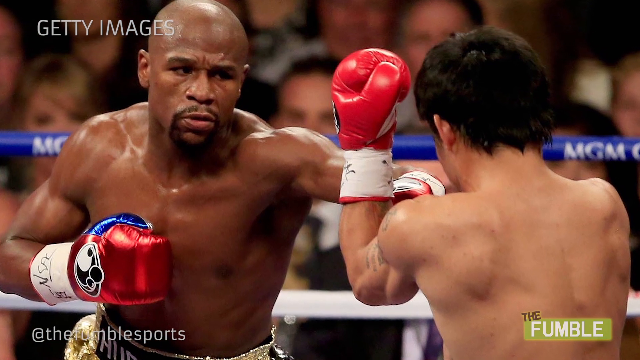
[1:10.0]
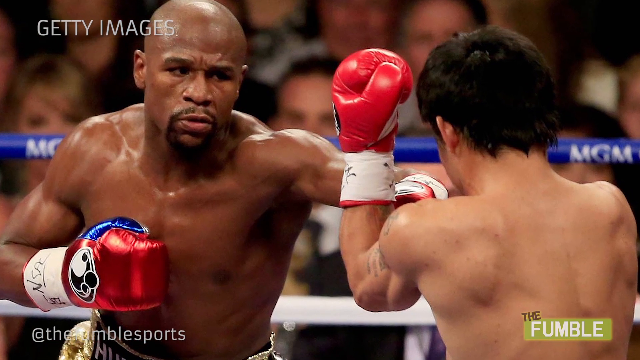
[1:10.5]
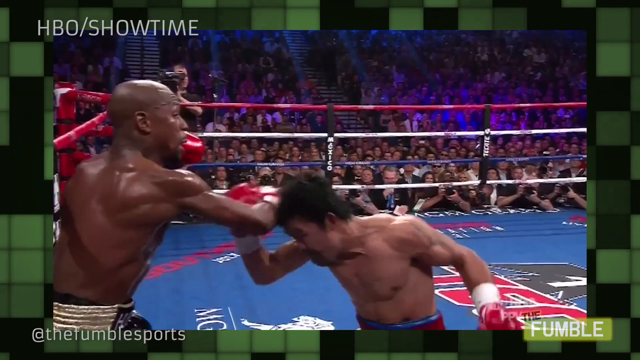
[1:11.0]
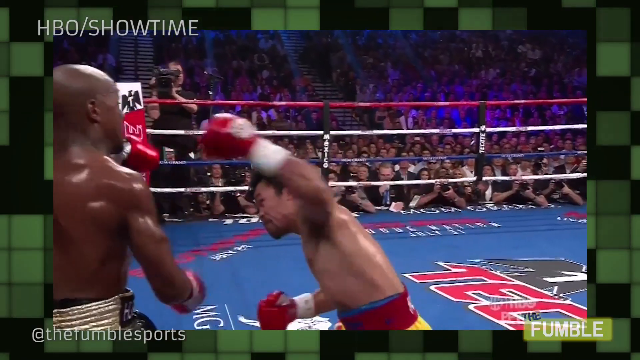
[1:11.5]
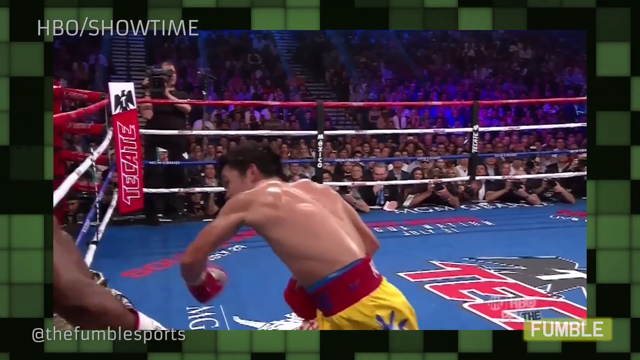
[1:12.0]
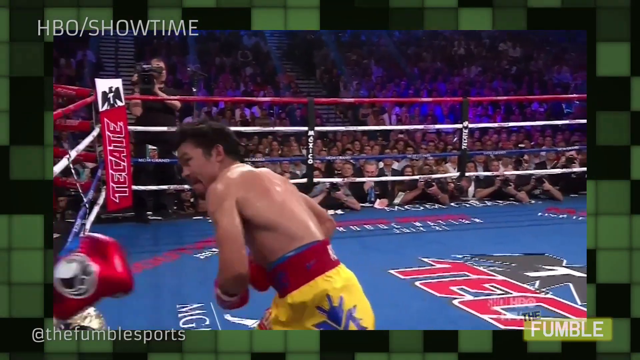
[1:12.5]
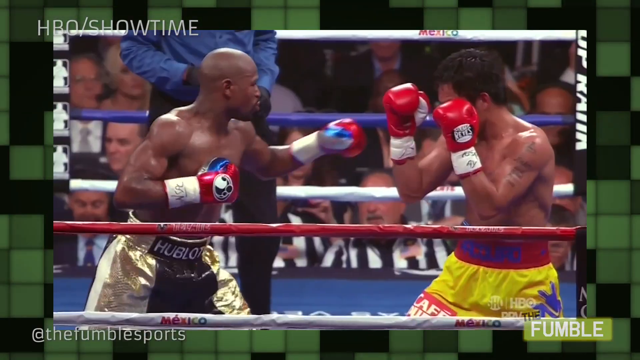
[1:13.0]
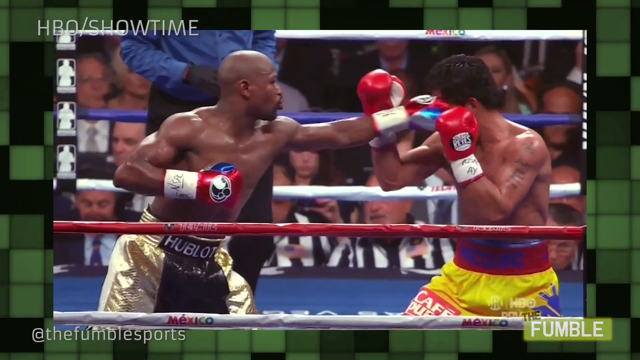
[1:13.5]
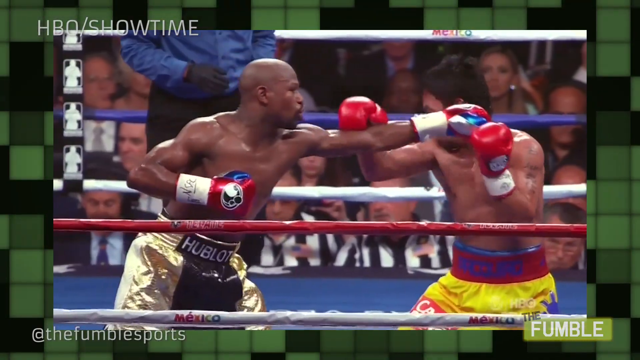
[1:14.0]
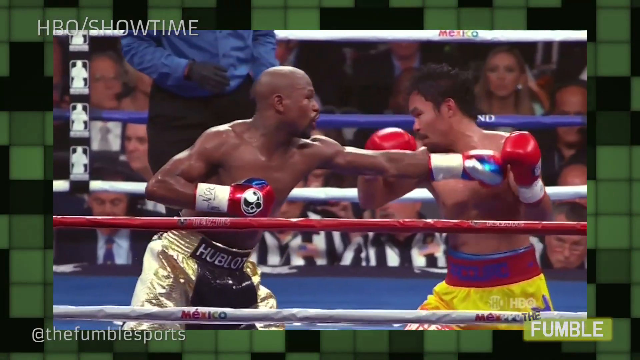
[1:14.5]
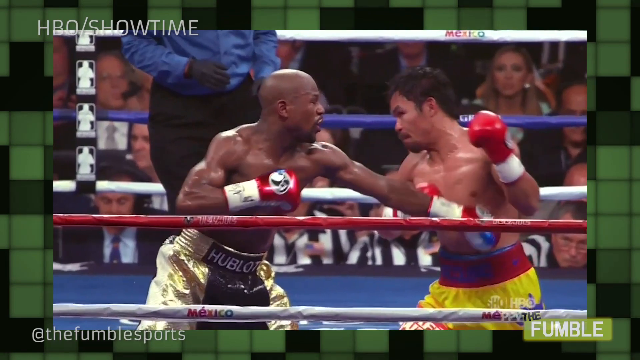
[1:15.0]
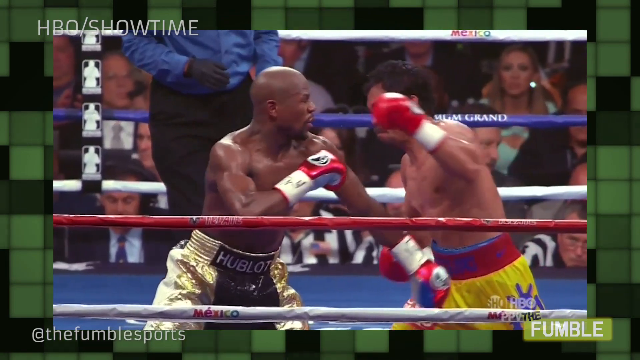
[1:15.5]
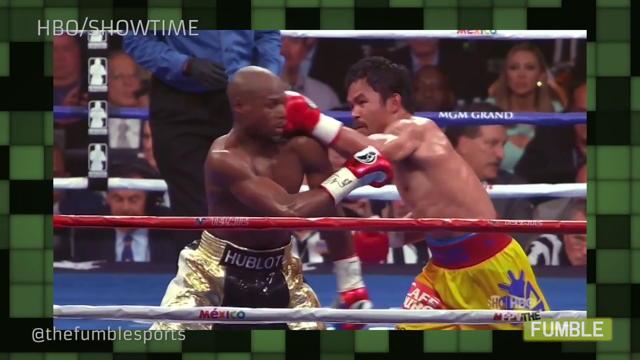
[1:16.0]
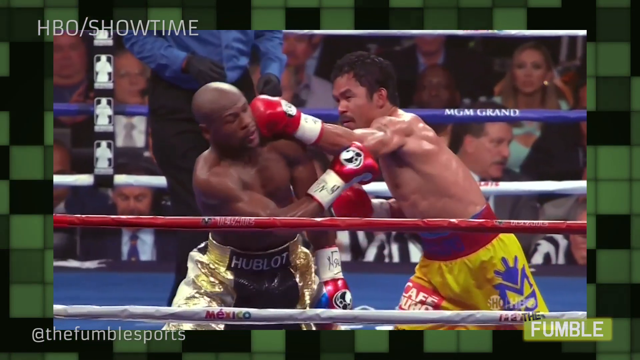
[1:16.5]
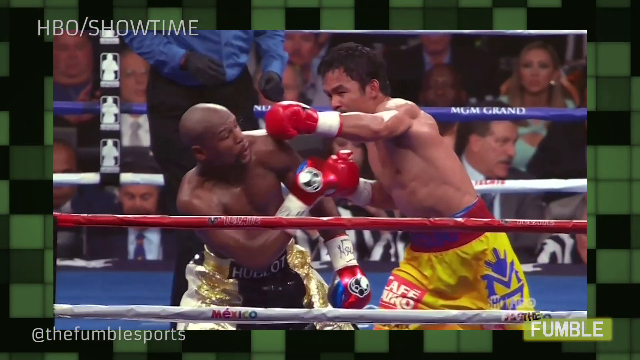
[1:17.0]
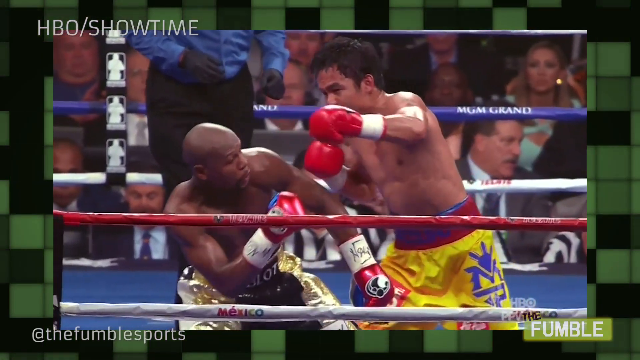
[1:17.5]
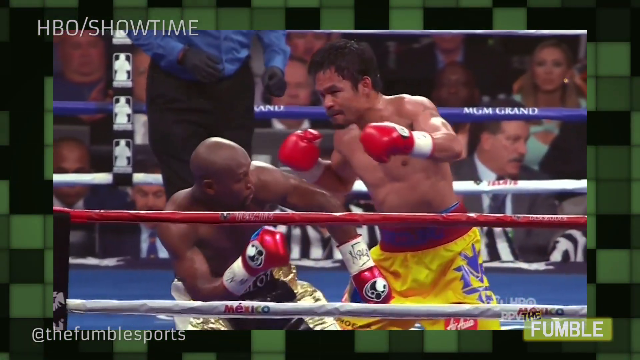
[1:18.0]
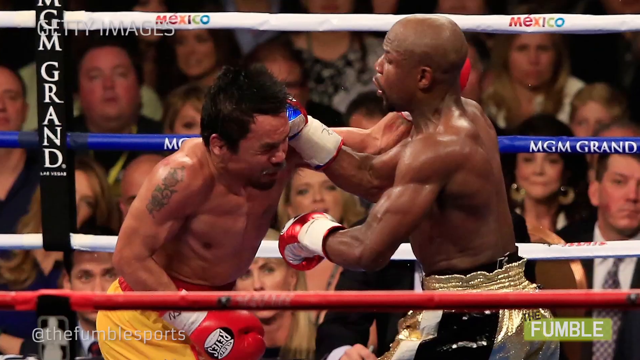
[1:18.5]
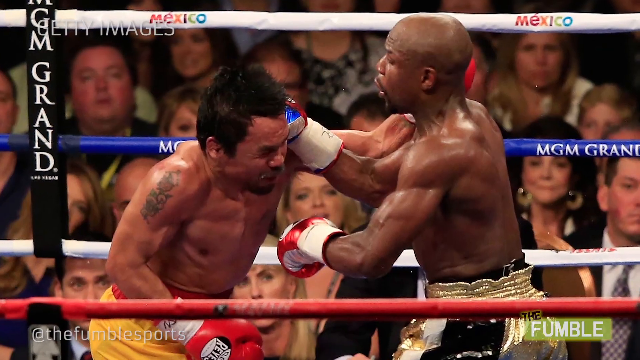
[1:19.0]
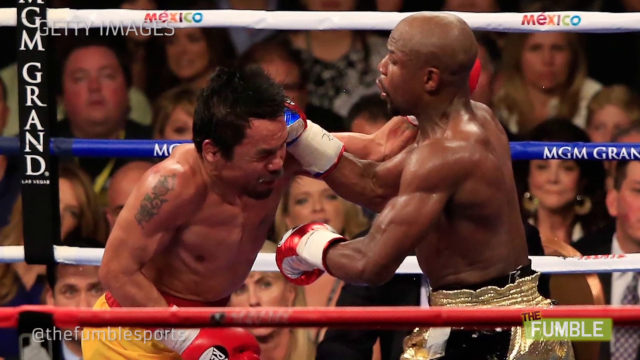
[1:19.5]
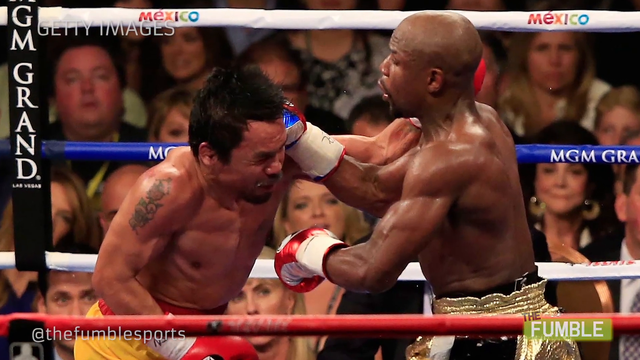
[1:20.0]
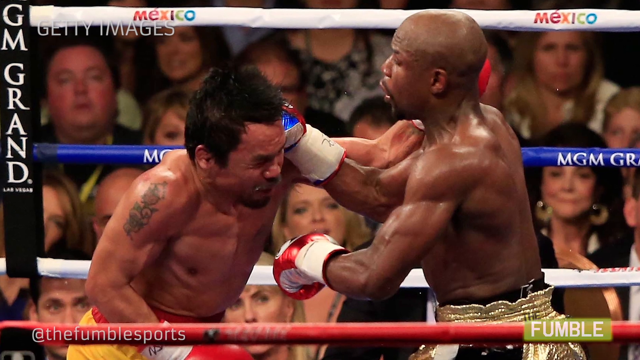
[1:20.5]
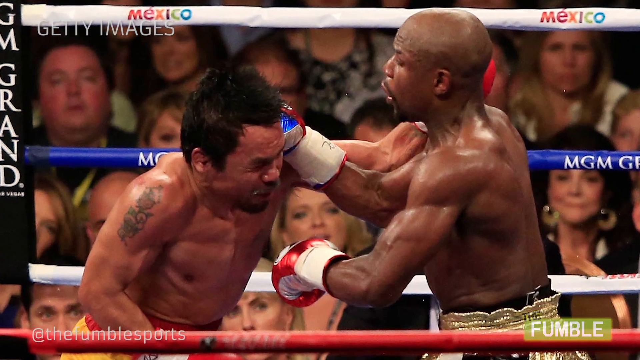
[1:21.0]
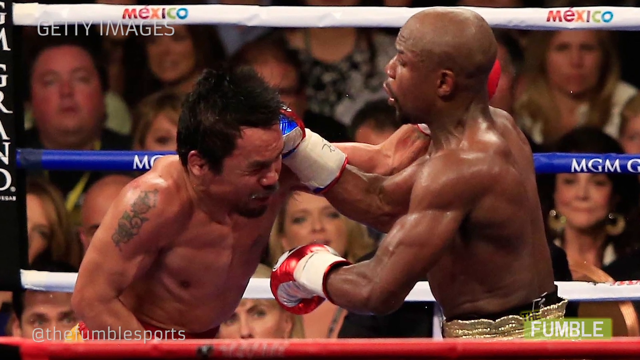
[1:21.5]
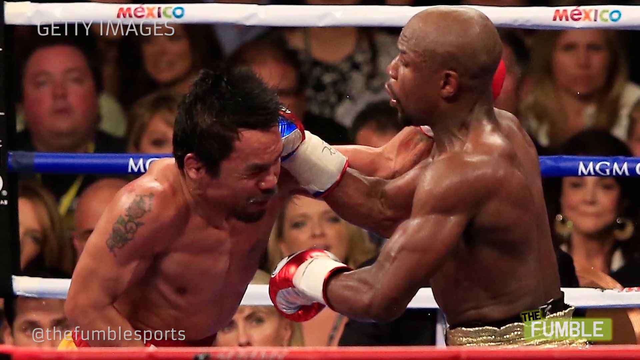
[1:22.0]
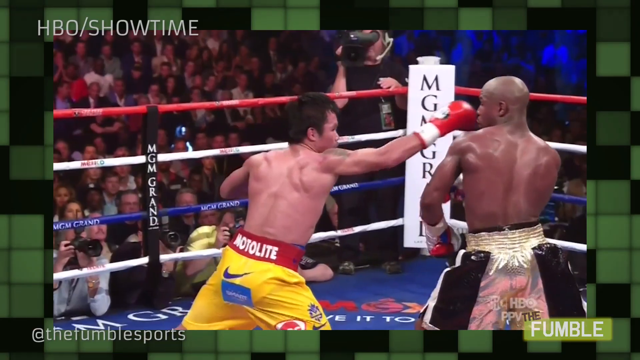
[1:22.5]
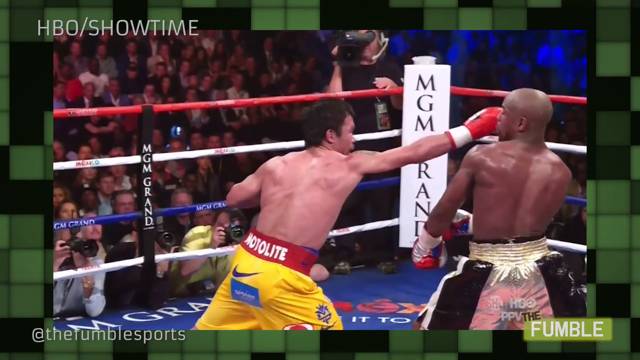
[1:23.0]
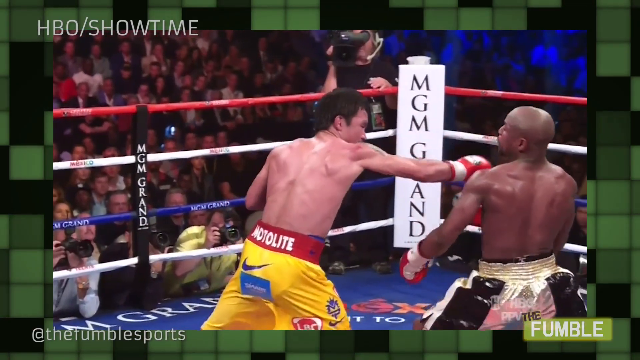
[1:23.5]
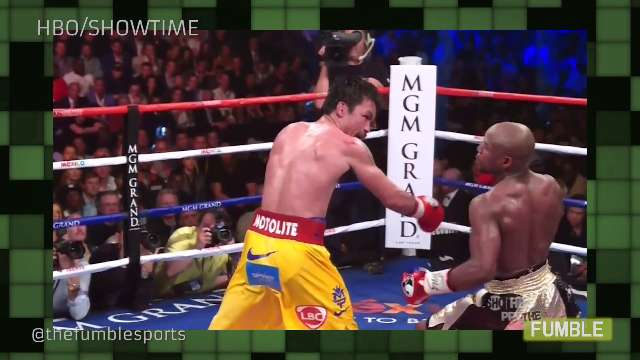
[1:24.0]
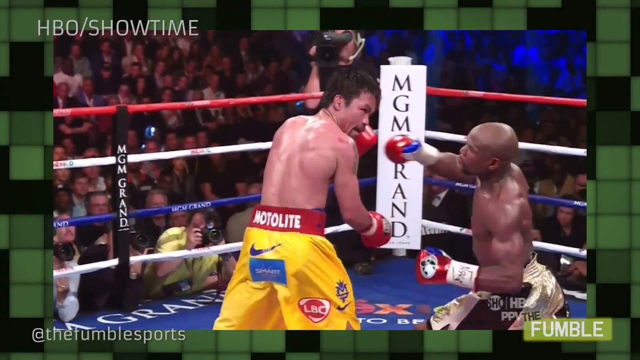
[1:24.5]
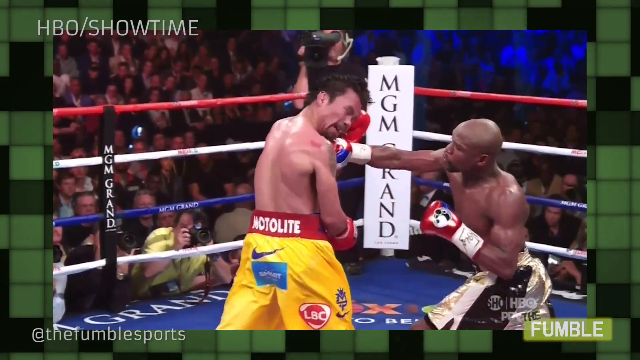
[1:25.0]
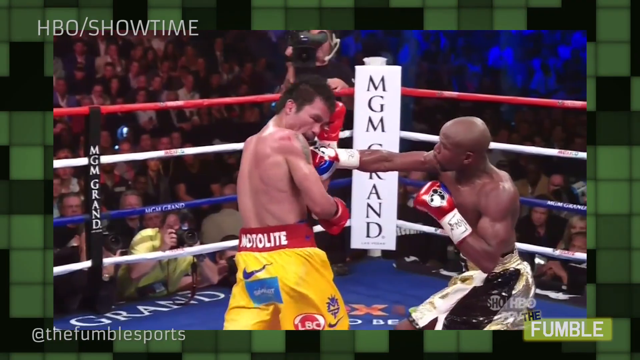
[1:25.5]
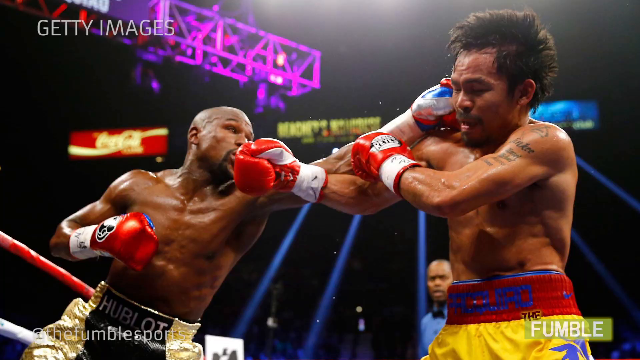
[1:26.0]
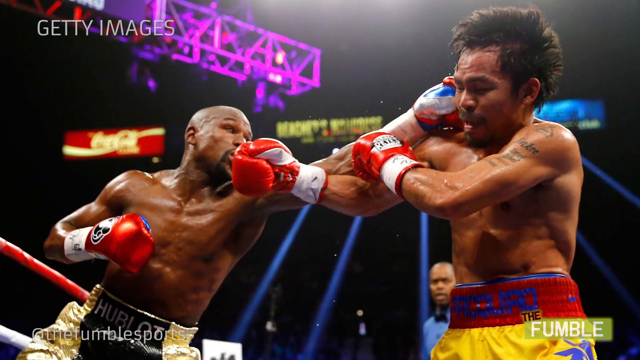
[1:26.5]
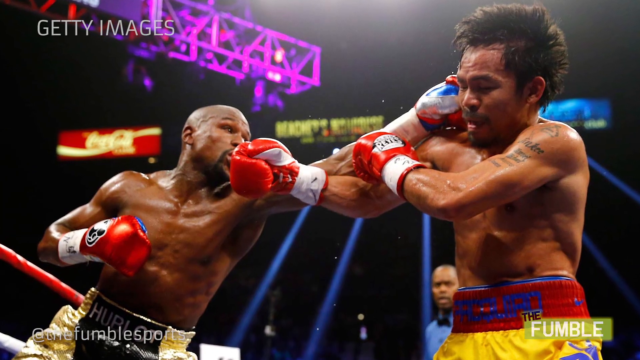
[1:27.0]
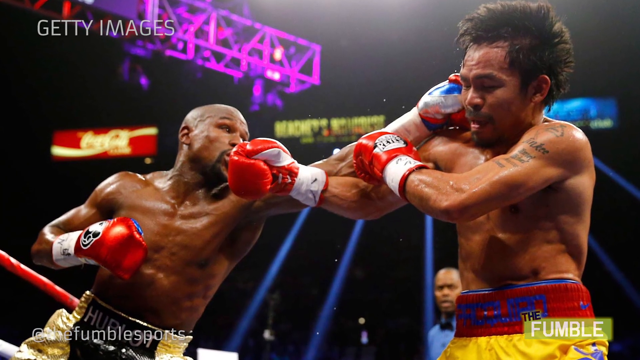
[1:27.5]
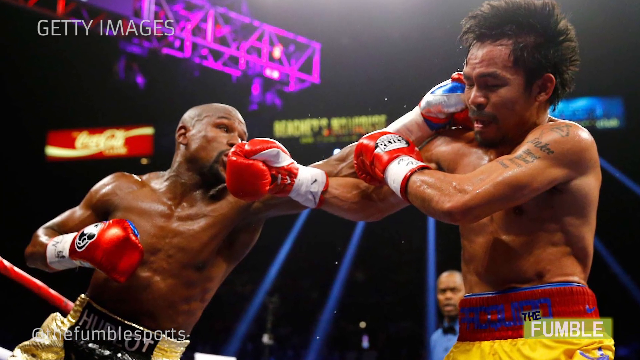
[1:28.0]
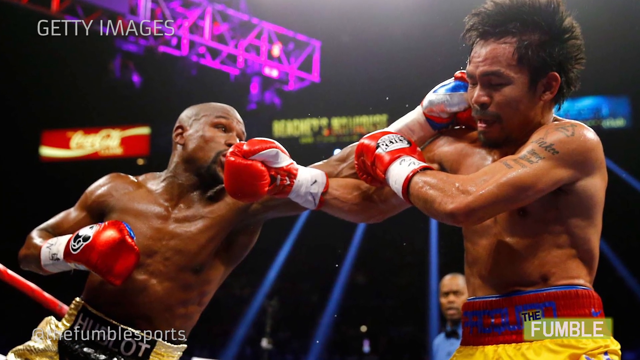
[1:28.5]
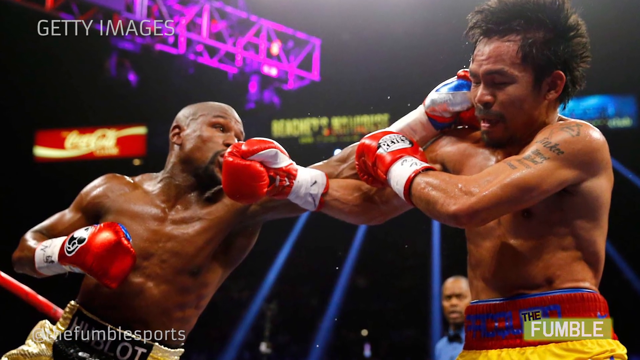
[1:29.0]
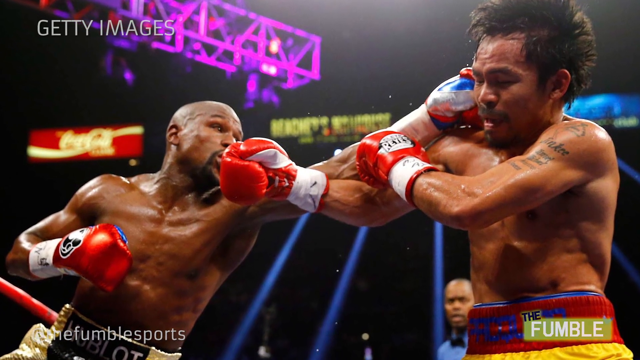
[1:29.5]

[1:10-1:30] A close-up still photograph of the Mayweather-Pacquiao match shows only their torsos and heads, with Mayweather reaching forward to punch Pacquiao. The video changes to footage of the match inside the ring, with a large crowd of people behind the boxers and a cameraman filming. It begins with Pacquiao punching Mayweather, who is up against the ropes, then switches to Mayweather punching toward Pacquiao, and Pacquiao retaliates with a punch to Mayweather. This footage is slowed down like a recap. Next, a photograph shows the boxers mid-fight, with Mayweather punching the side of Pacquiao's head. Footage from inside the ring follows, in which Mayweather and Pacquiao both hit each other and take shots to the head. Finally, a still photograph shows Mayweather reaching and punching Pacquiao on the side of the head mid-fight, both covered in sweat.